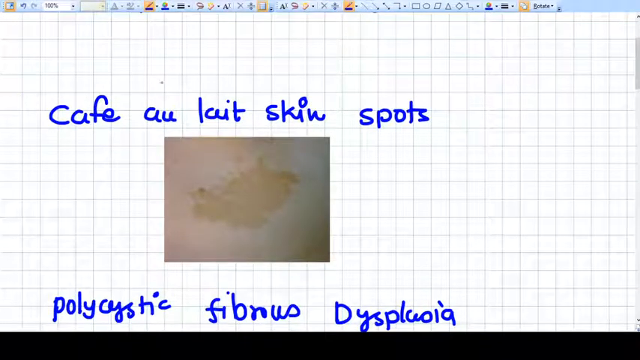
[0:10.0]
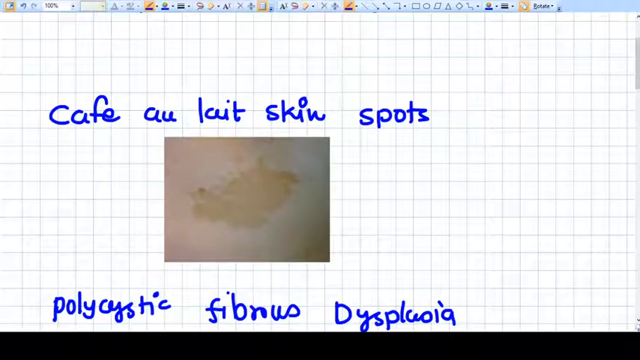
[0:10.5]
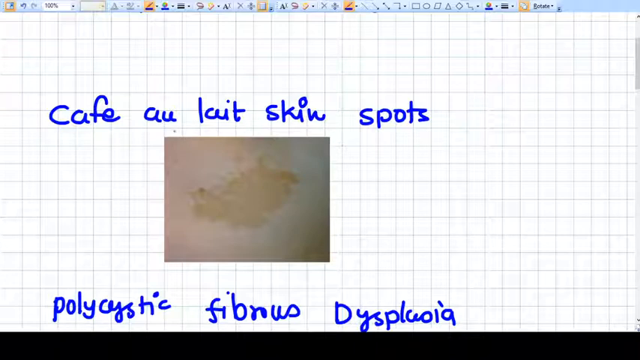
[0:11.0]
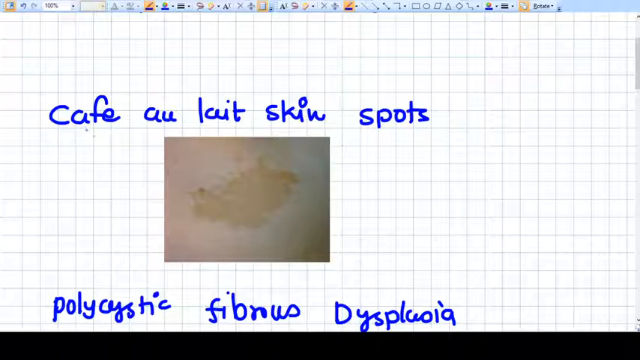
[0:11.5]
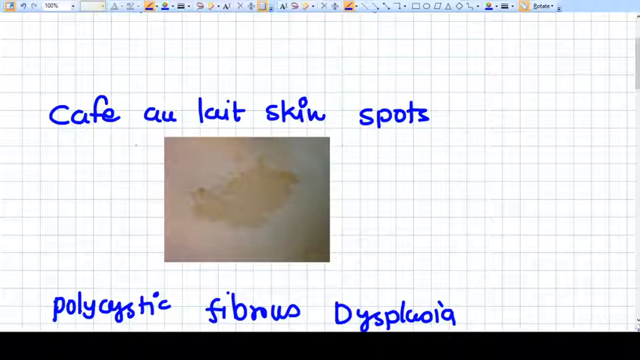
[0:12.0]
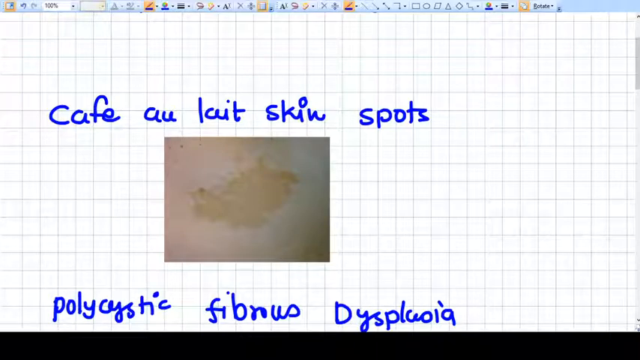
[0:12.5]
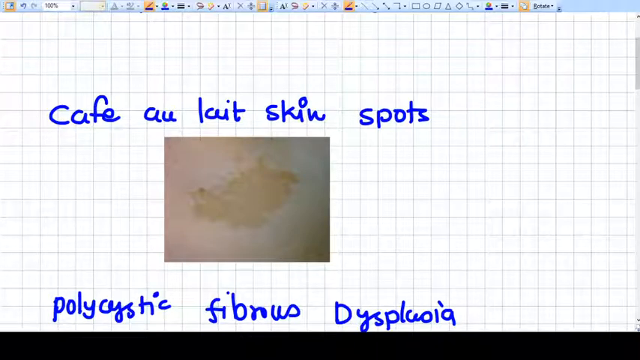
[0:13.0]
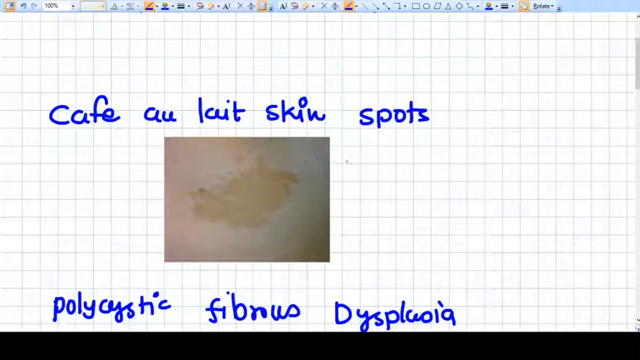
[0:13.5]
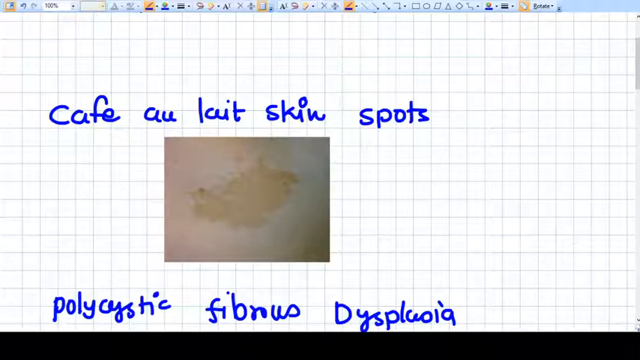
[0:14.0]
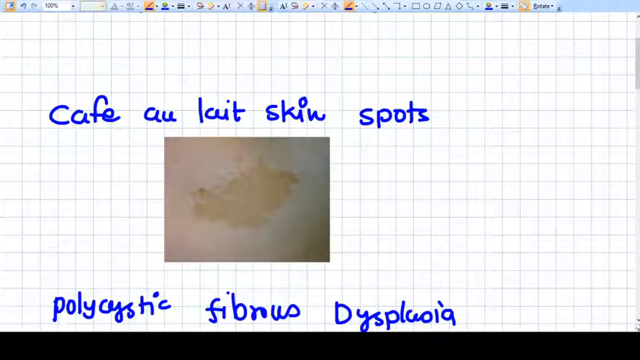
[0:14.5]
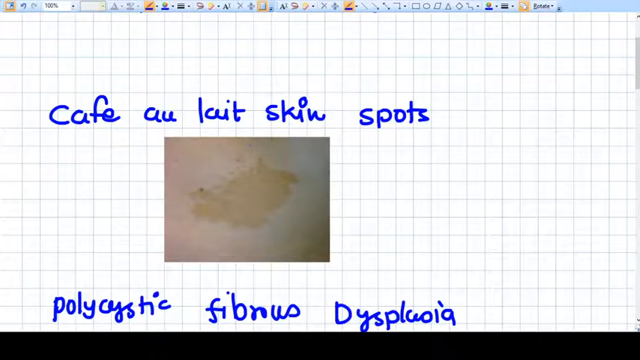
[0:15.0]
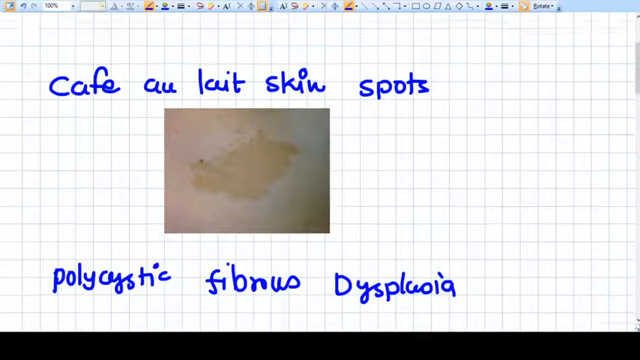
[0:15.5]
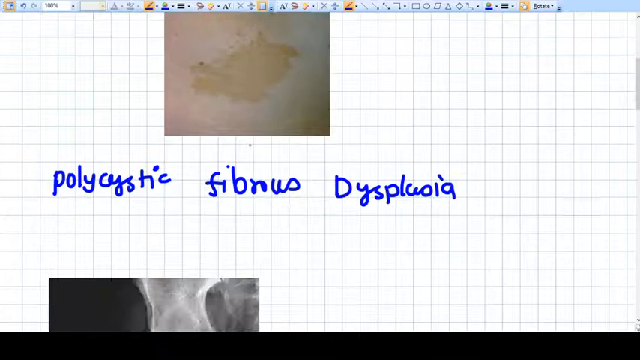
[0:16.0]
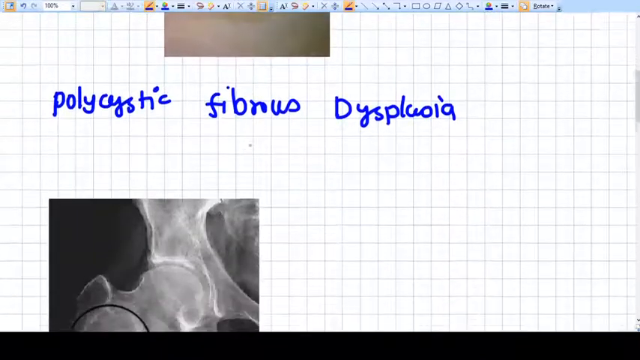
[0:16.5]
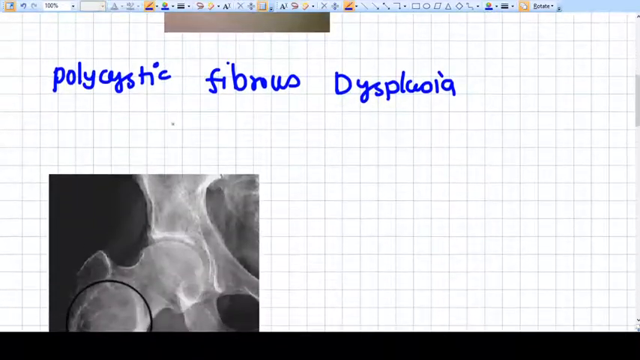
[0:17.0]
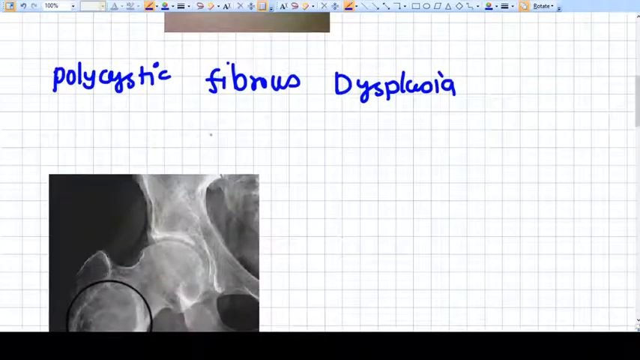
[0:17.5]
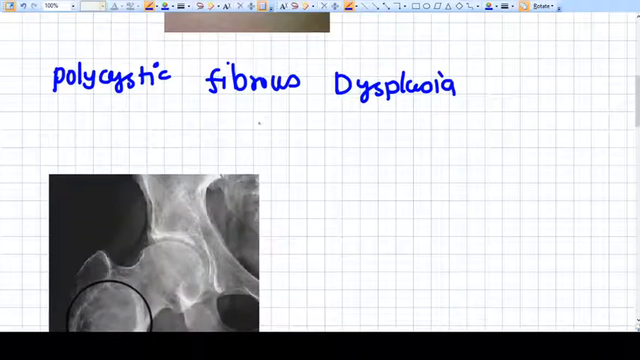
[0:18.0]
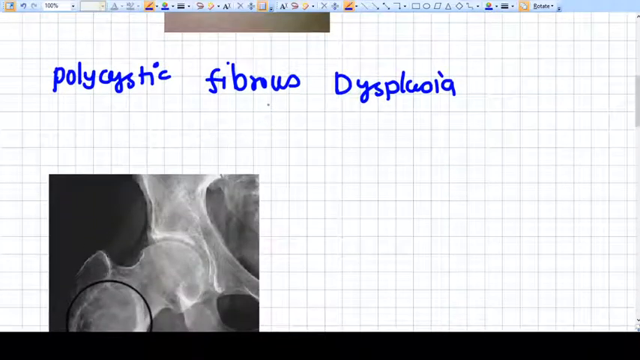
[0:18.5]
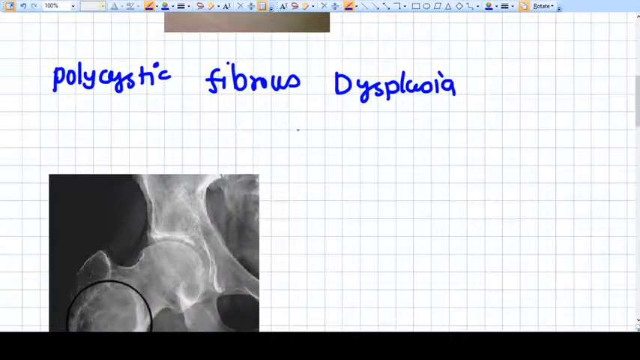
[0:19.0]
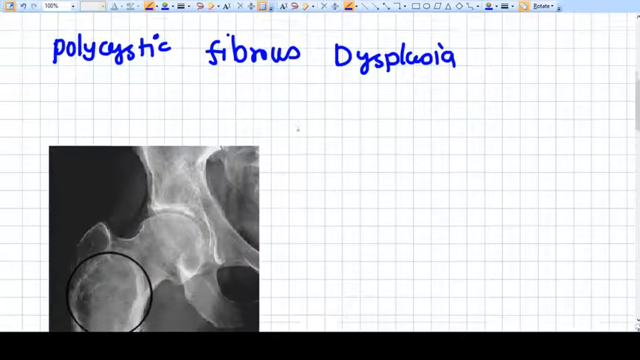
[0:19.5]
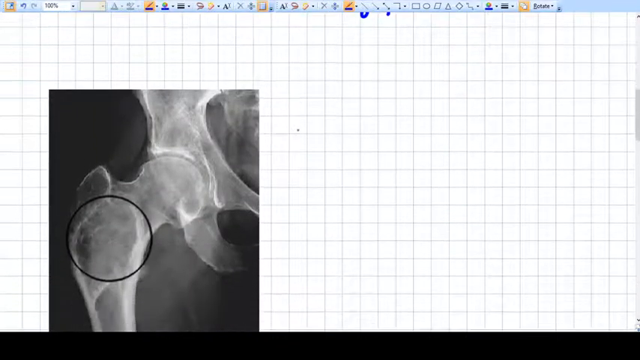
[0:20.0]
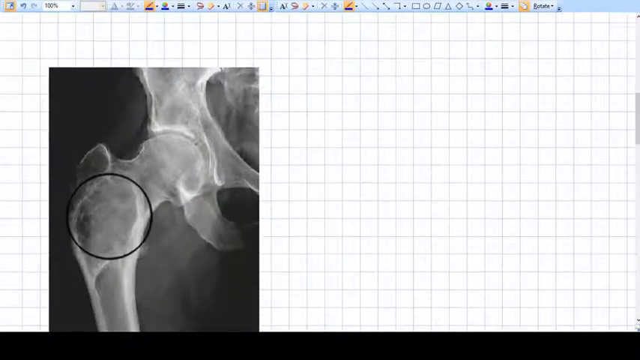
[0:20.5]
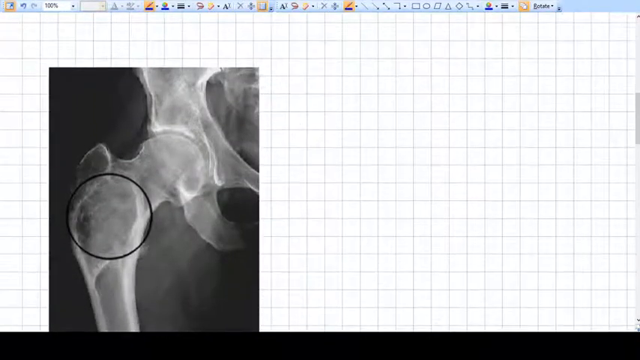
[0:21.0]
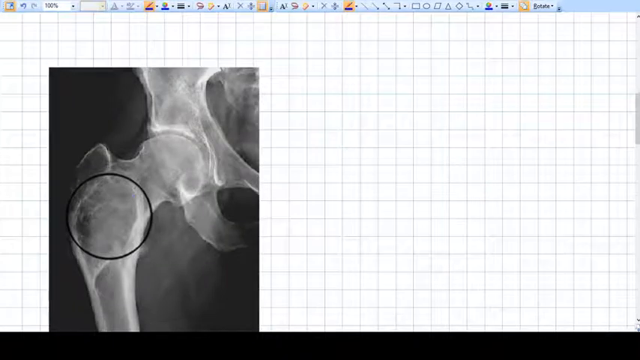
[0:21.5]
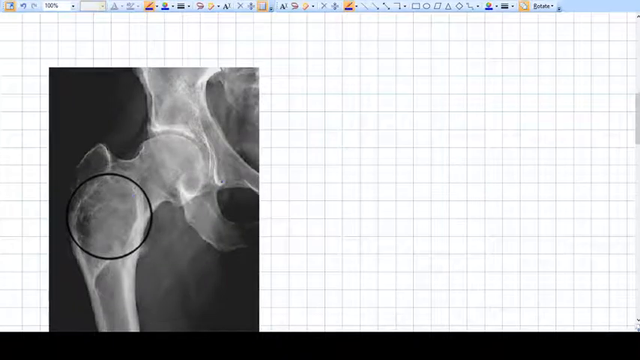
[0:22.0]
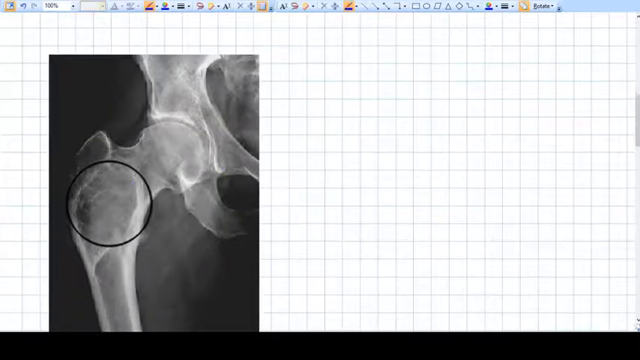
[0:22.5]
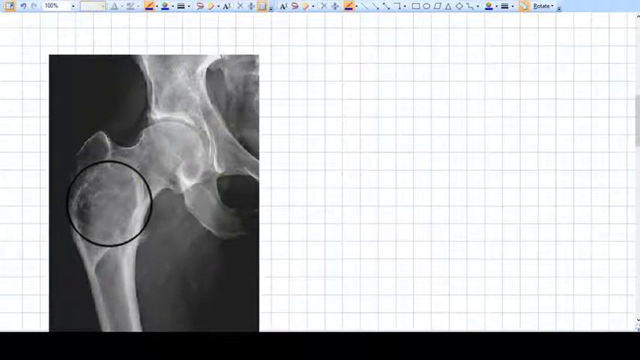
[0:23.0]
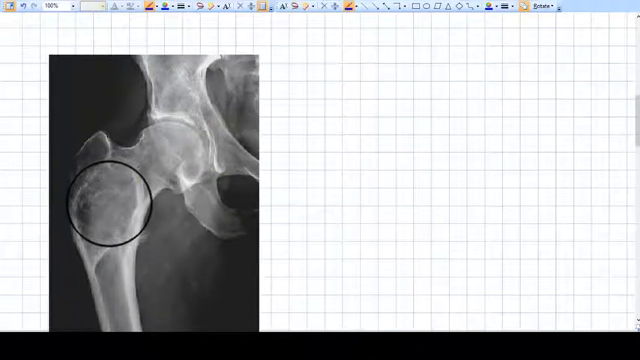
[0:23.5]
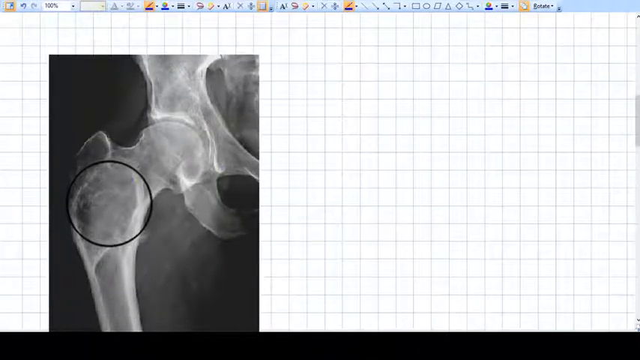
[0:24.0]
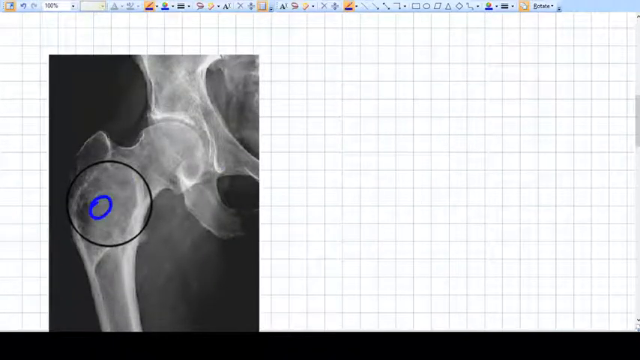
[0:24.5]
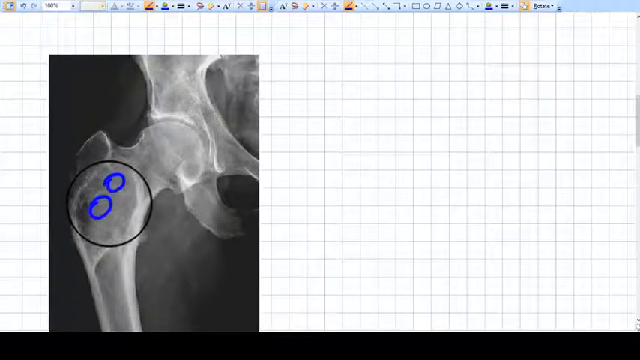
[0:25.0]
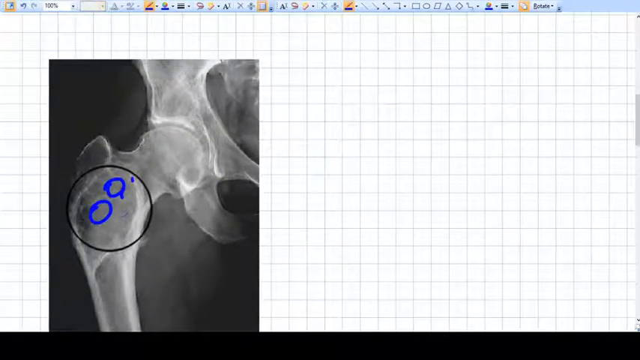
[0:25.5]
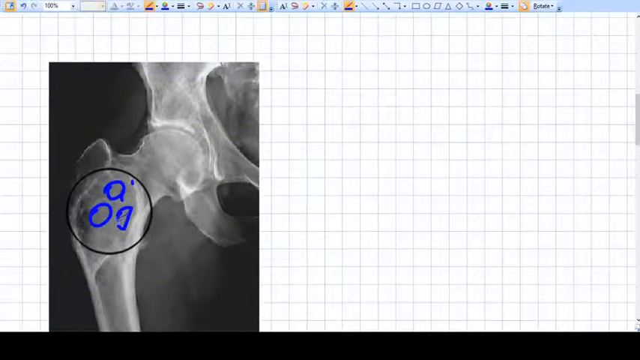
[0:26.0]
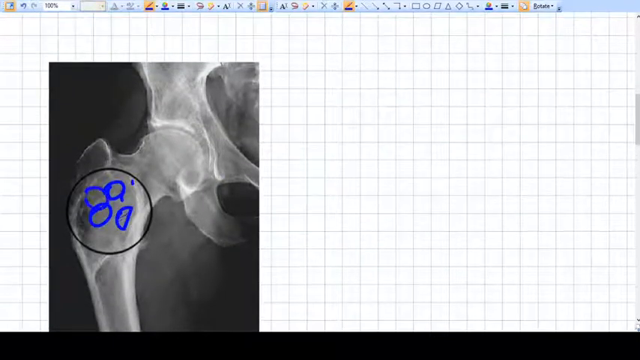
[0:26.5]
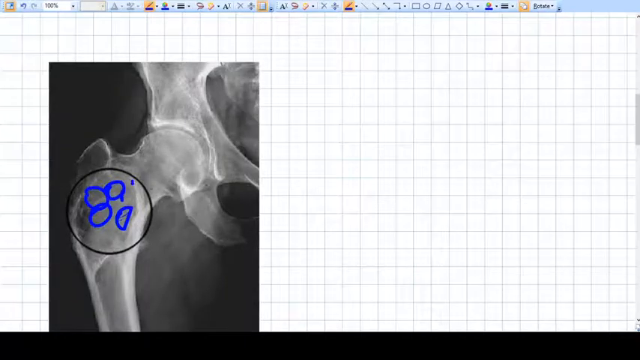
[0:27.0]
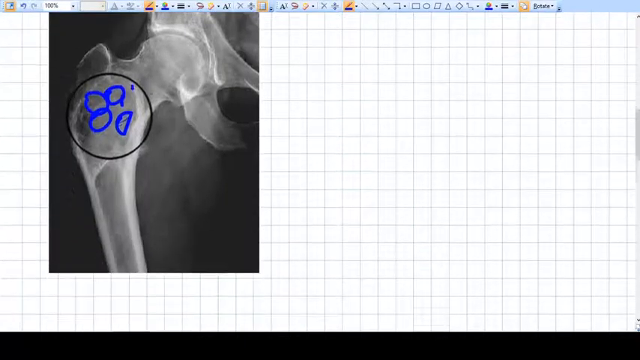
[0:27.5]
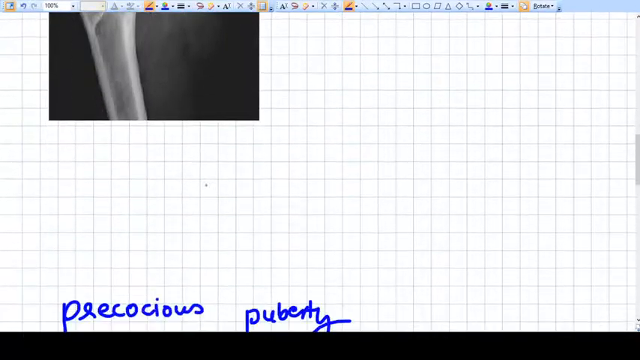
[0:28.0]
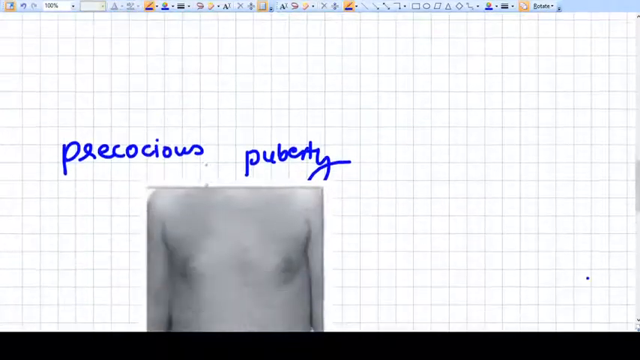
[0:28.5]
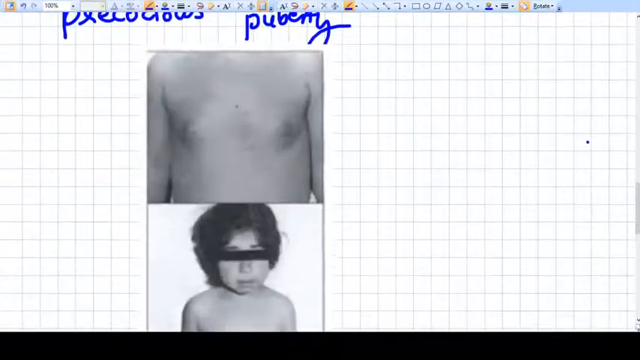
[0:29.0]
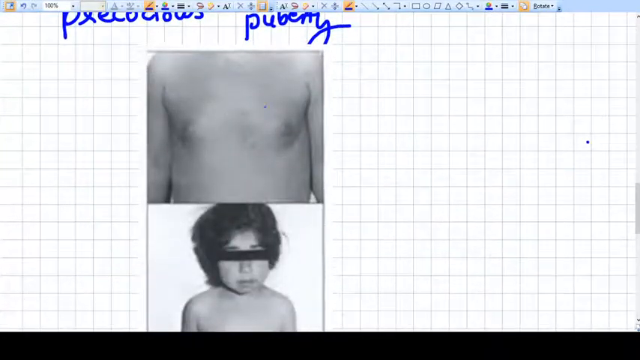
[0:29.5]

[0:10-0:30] The image continues as the user's mouse highlights around the spot, then they scroll down. An X-ray of bones appears, possibly of the pelvis area. The person draws two circles and then a sideways half circle, making it look like a leaning sad face, and adds little dots and another circle between the circles, giving a sort of three-eyed look. Scrolling down a little more, there is some space and then the text "precocious puberty." Below that is a picture of someone's chest area, with a little dot over the left breast area from the viewer's perspective. Scrolling further down reveals a kid with their eyes censored by a black bar.